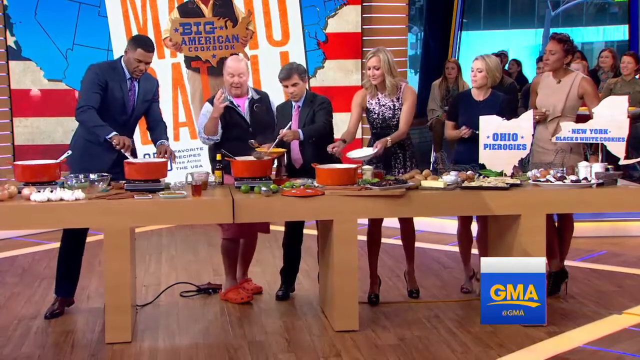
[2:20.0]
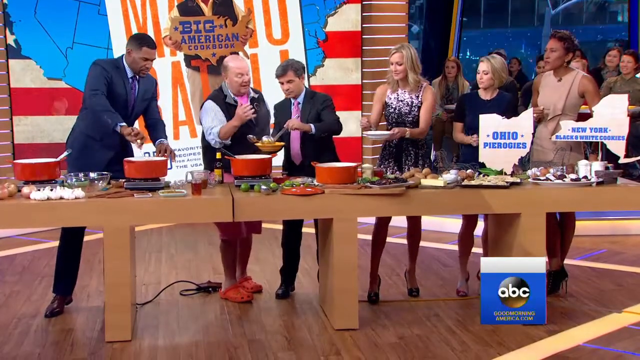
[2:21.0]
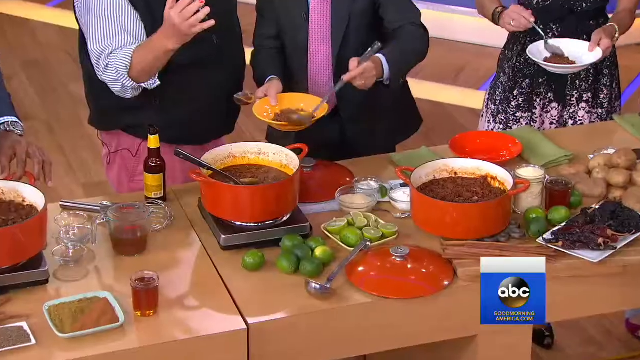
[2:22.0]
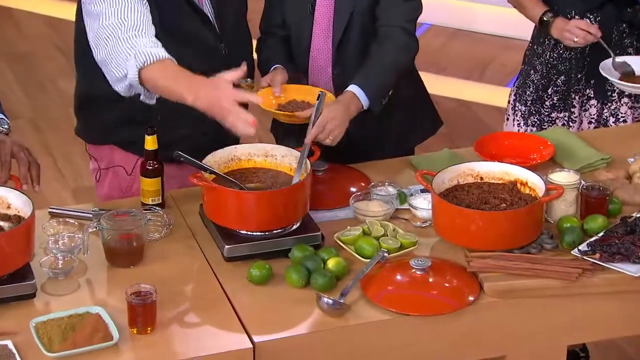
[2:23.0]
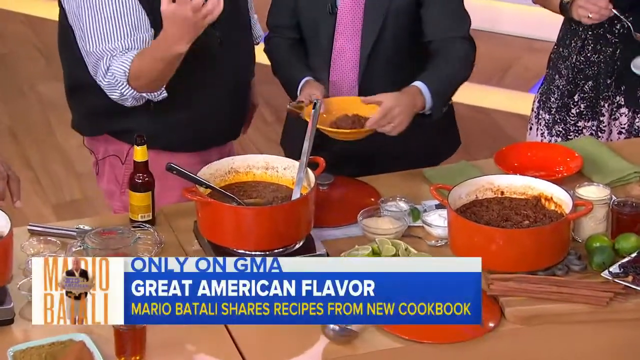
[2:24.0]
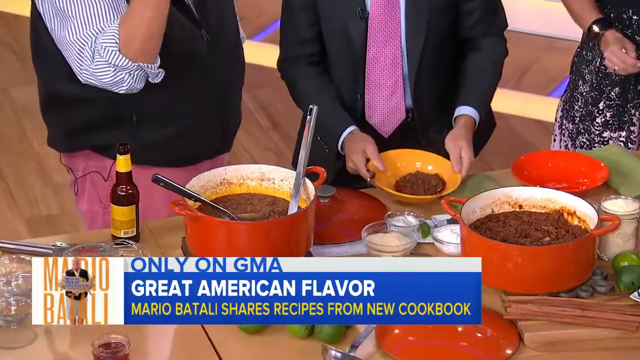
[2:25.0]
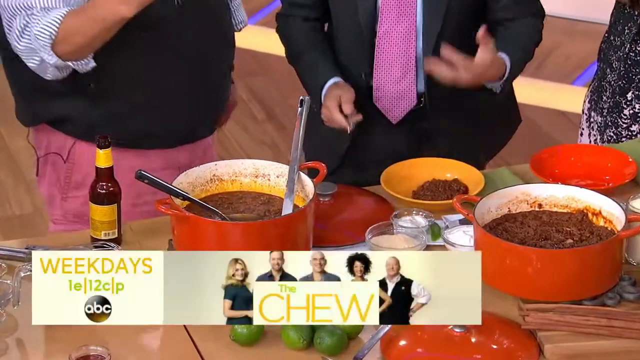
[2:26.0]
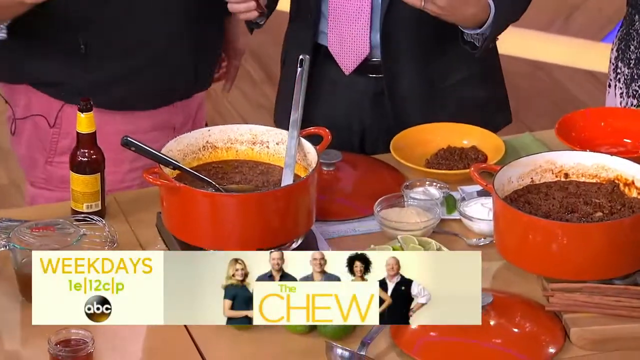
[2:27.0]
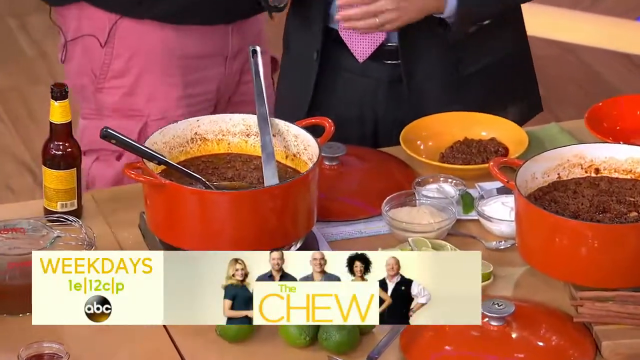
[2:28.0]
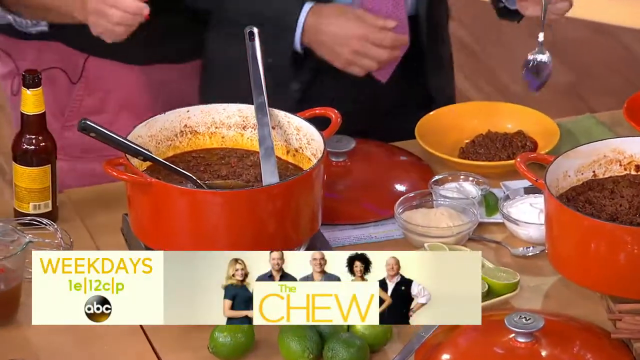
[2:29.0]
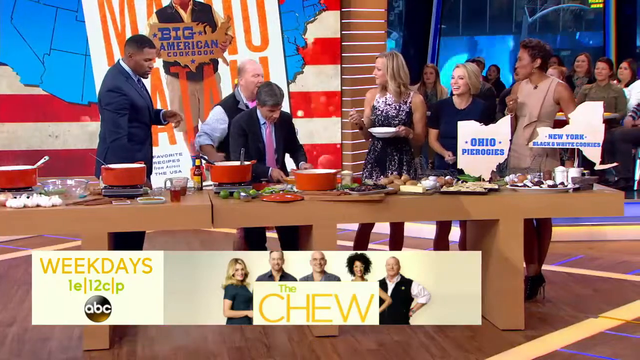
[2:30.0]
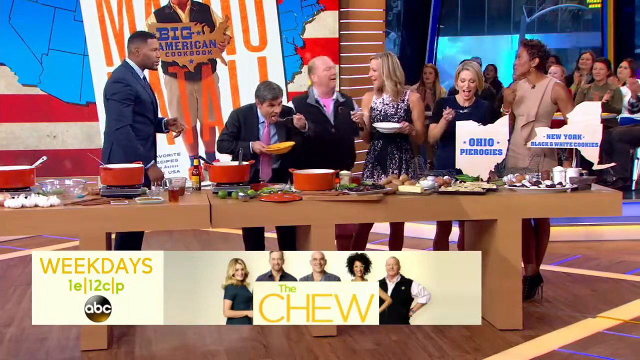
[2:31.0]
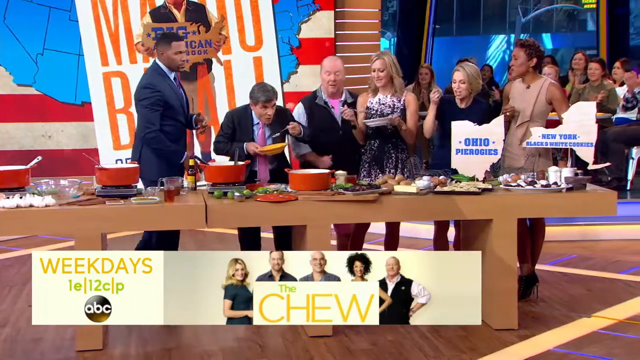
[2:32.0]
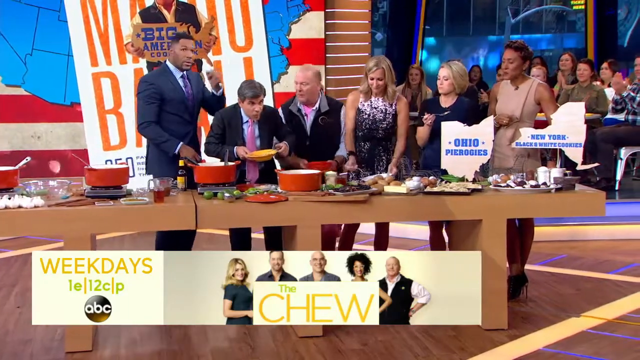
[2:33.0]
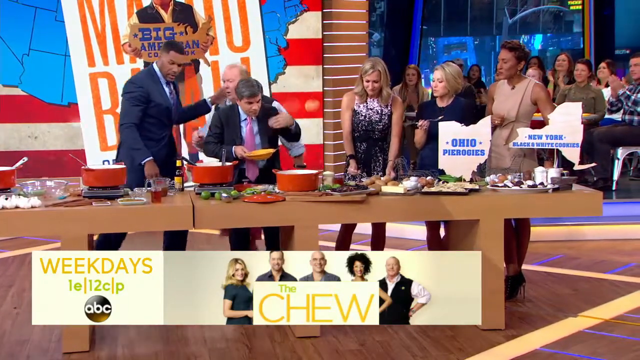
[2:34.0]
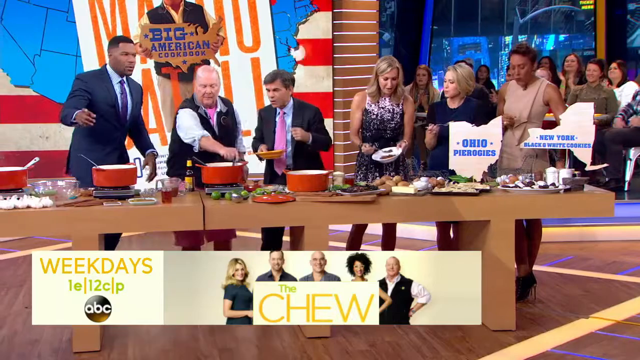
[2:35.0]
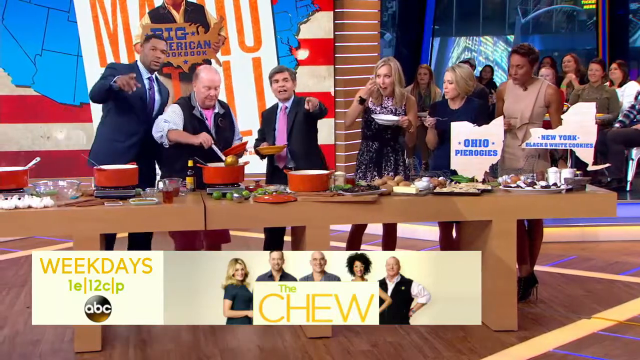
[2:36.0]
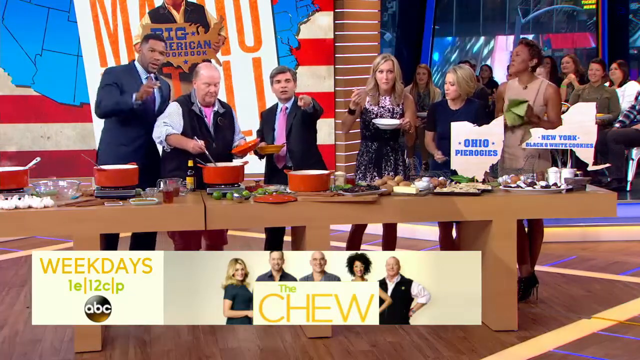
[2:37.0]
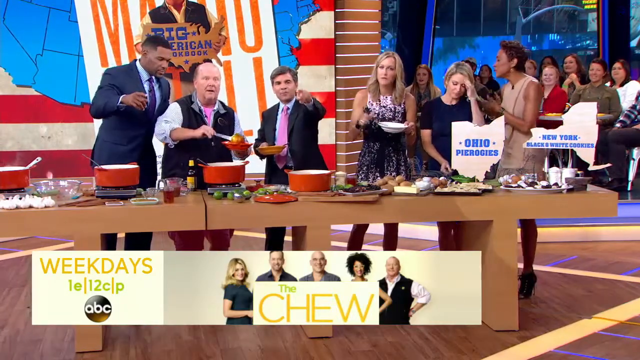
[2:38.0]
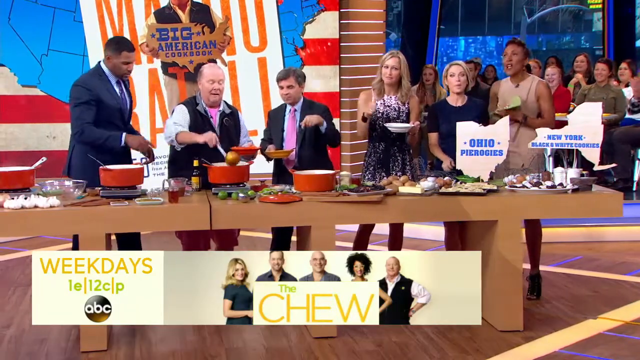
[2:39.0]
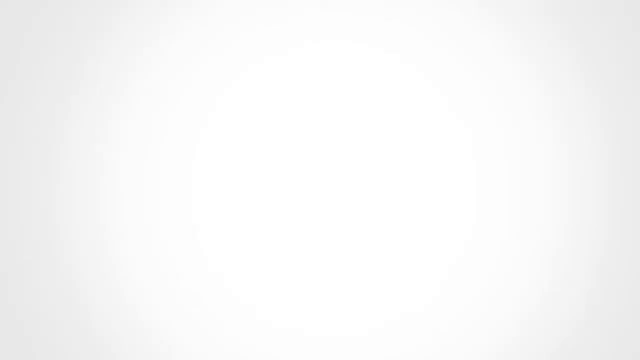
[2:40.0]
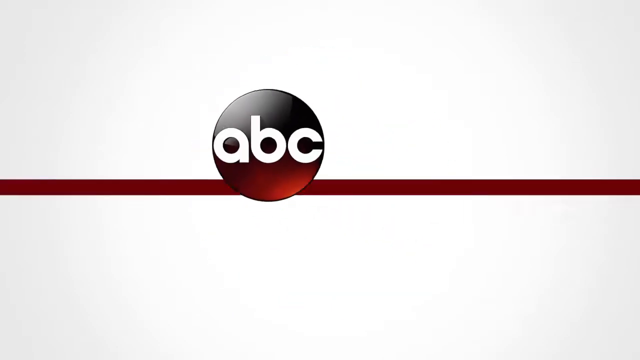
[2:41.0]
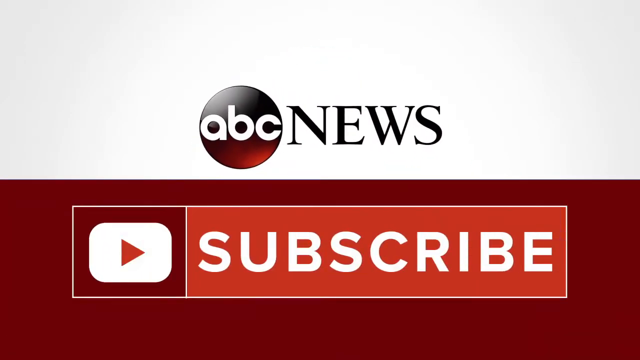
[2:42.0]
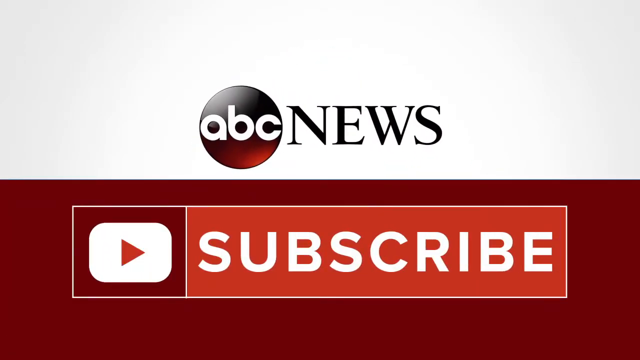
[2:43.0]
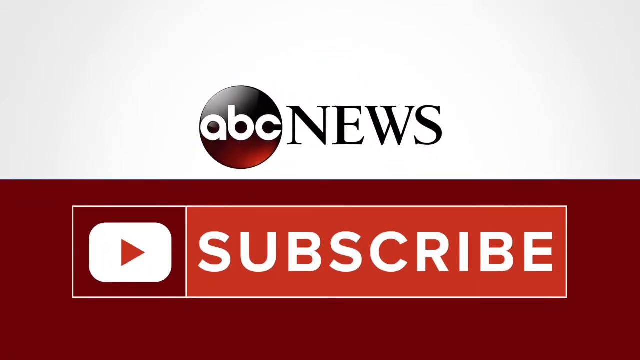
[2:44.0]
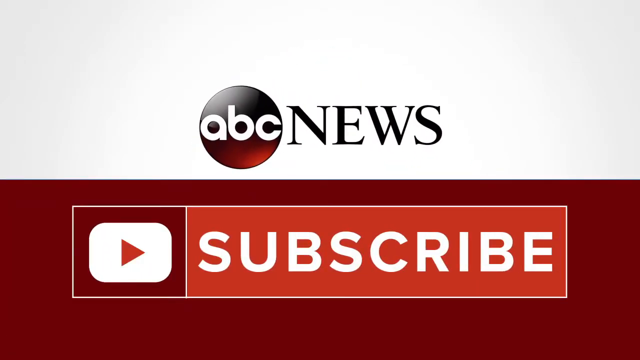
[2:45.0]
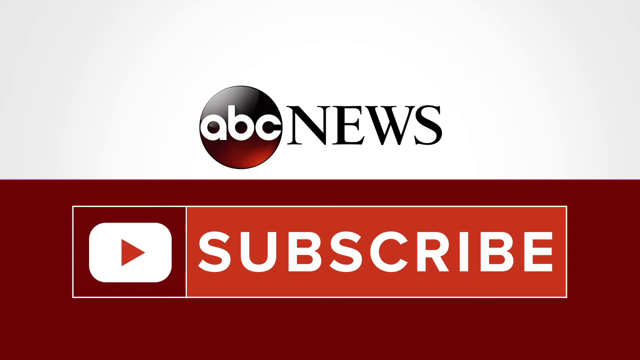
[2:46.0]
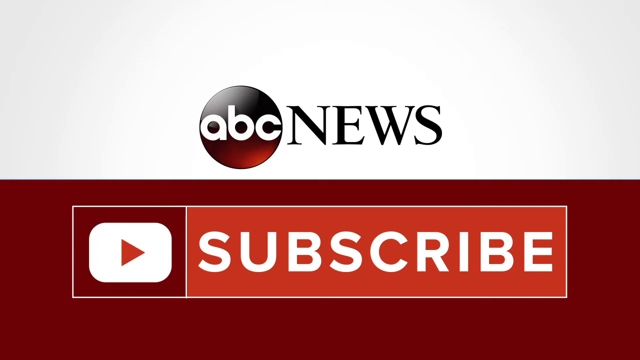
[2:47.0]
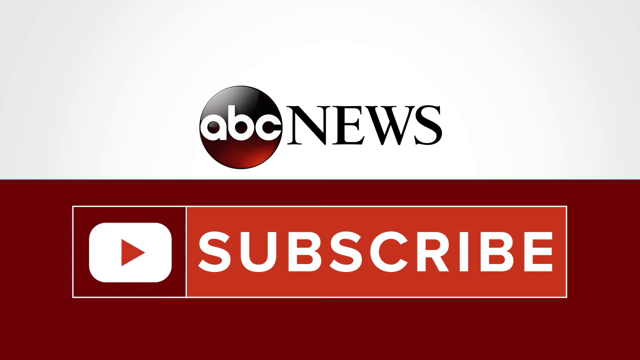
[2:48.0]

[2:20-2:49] The camera pans out to more people at the table; there seem to be three men and four women. On the right side, two states pop up on the screen in white: "Ohio" and "New York." The first woman on the left, who wears a dress, holds a plate in her hands and seems to stir the white plate with her right hand. All three women wear heels. The camera focuses on the man in the suit on the right. With his left hand he puts a cooking utensil, like a spoon, into the pot with liquid in it, which already has another spoon in it. His right hand holds a yellow bowl. He puts the spoon into the pot next to the lemons, then puts both arms onto the yellow plate and gently places it on the table, still holding a spoon in his right hand as he talks. The camera pans into the pot, and the spoon falls slightly, before the view returns to them cooking. The man in the center uses his left hand to try some of the food.